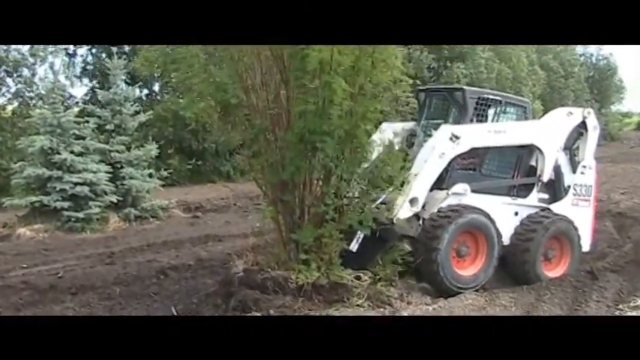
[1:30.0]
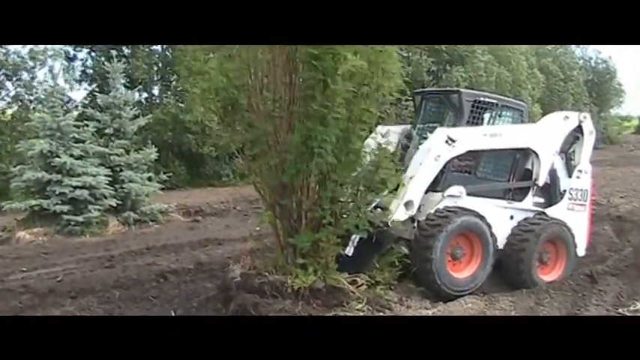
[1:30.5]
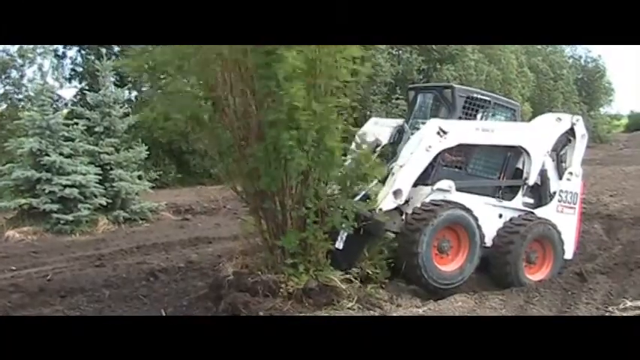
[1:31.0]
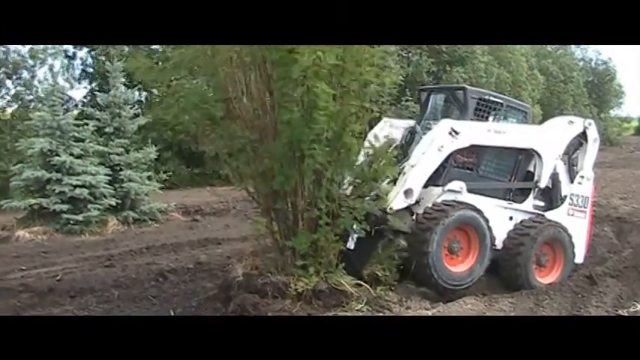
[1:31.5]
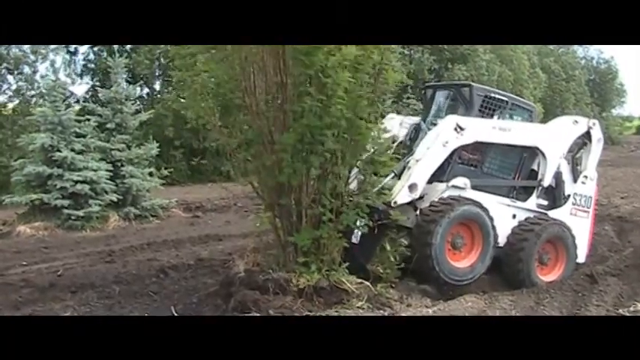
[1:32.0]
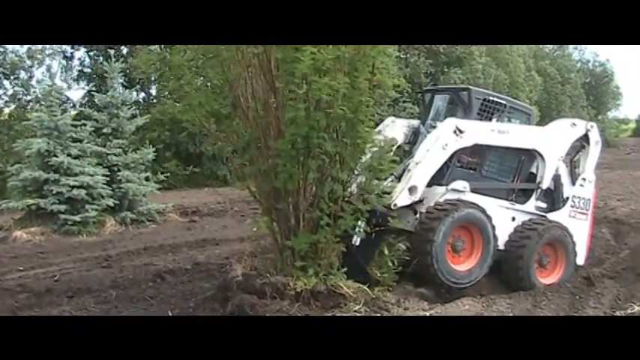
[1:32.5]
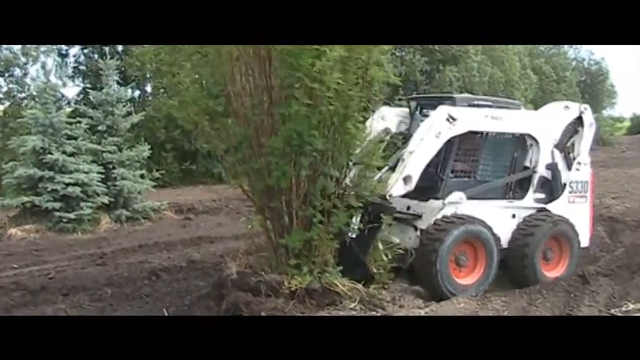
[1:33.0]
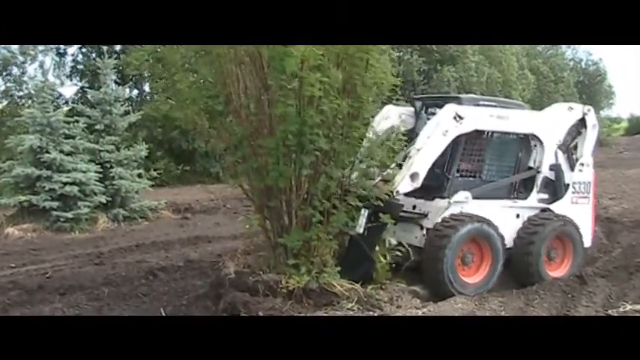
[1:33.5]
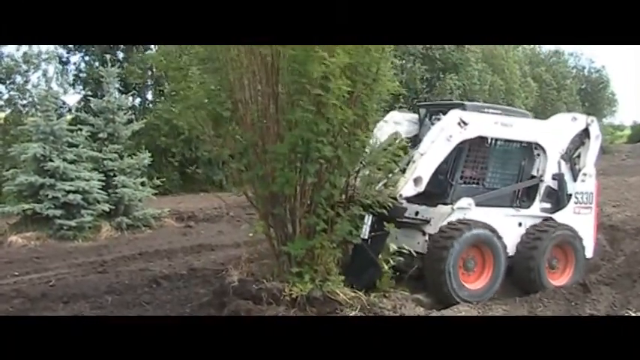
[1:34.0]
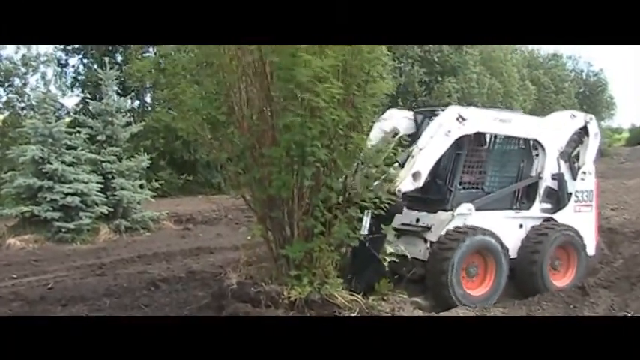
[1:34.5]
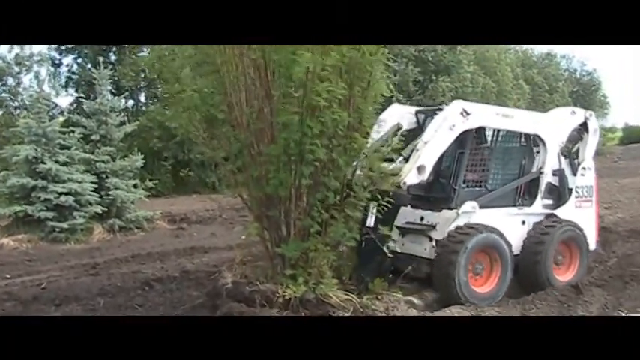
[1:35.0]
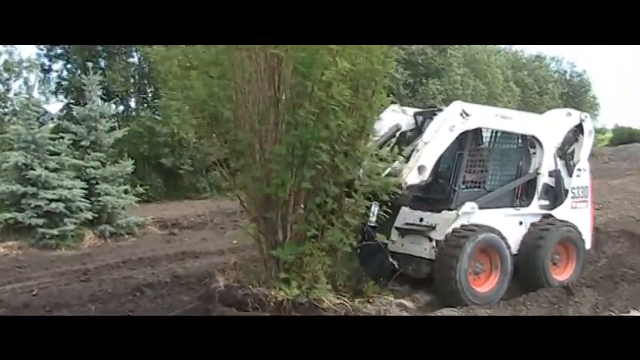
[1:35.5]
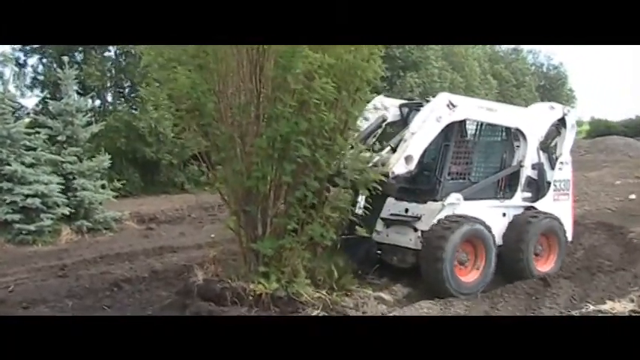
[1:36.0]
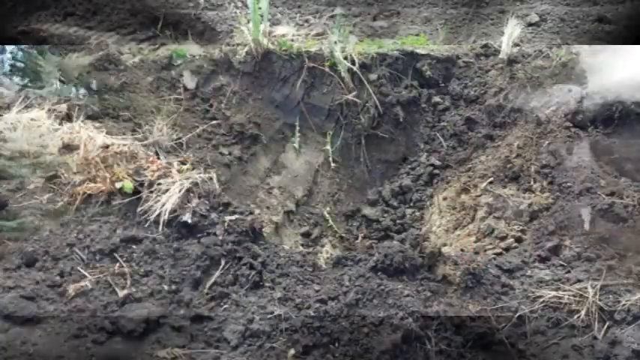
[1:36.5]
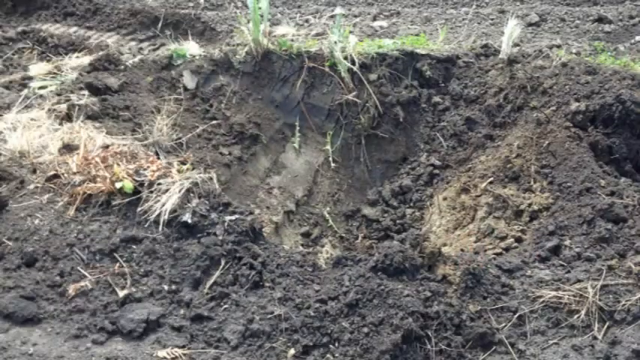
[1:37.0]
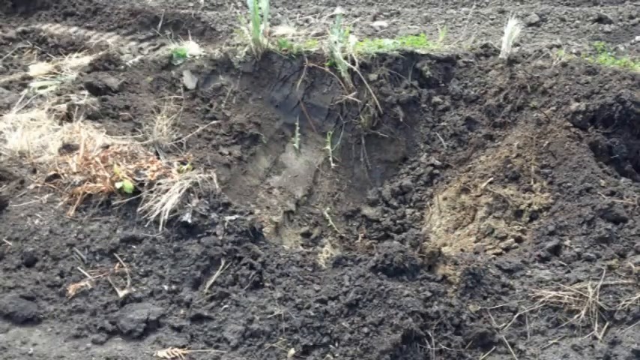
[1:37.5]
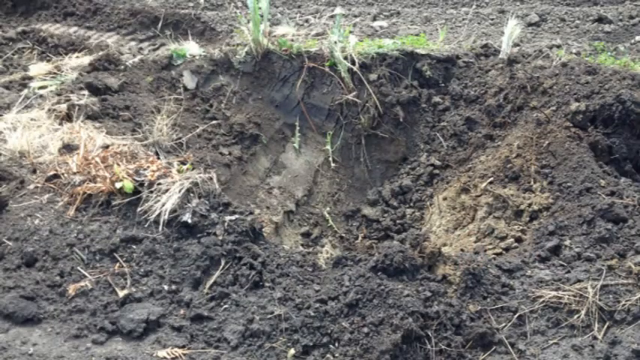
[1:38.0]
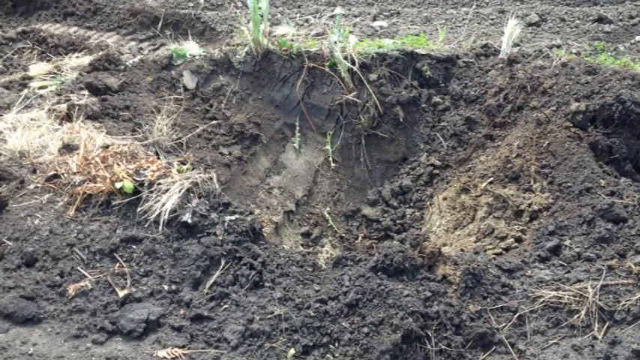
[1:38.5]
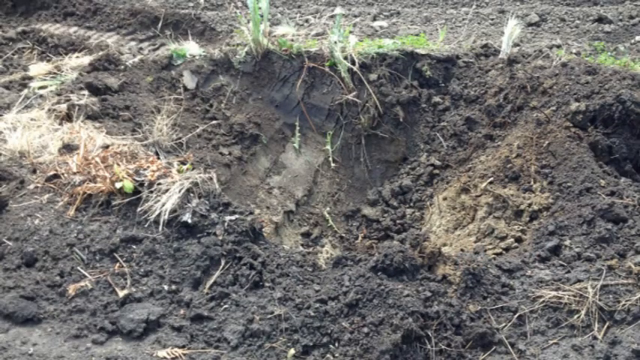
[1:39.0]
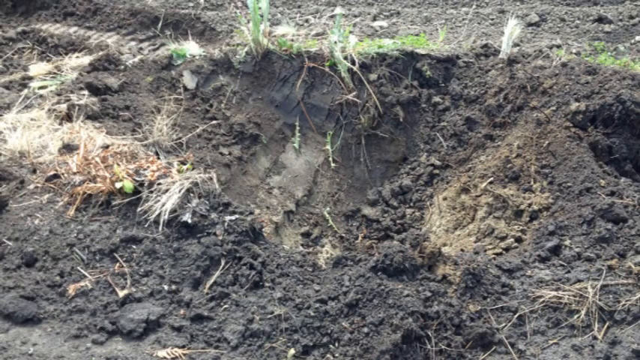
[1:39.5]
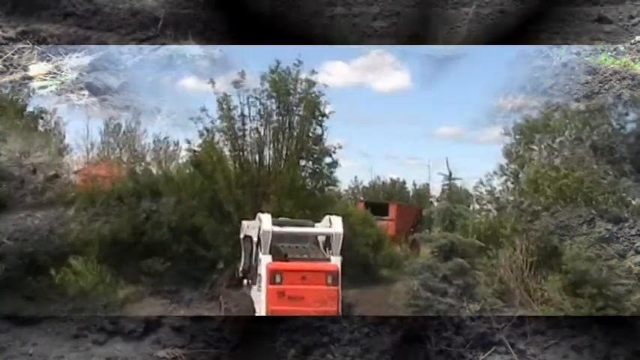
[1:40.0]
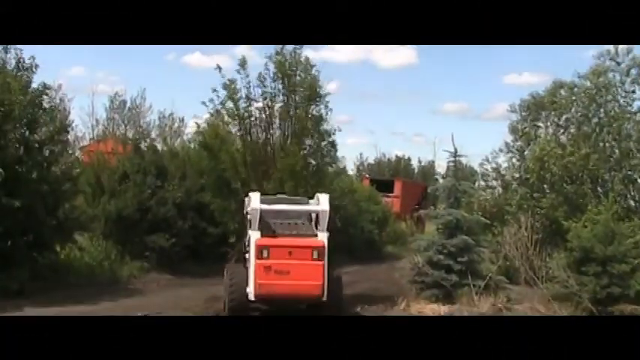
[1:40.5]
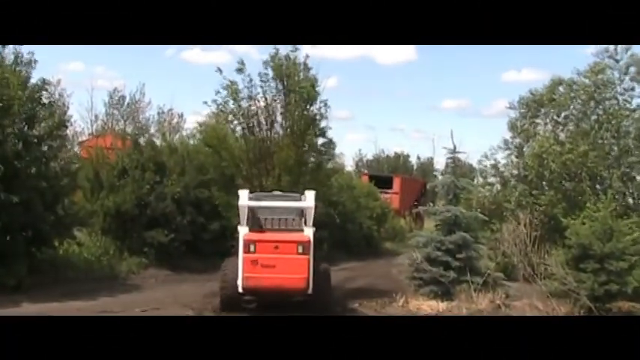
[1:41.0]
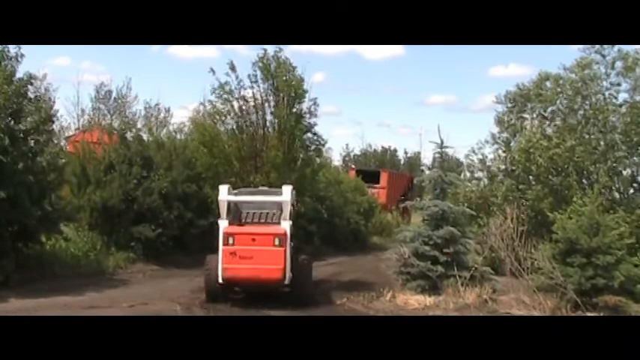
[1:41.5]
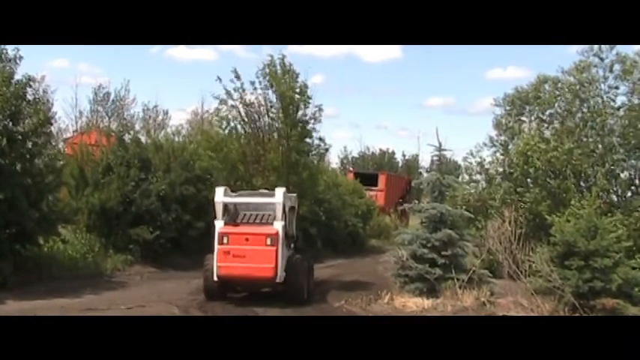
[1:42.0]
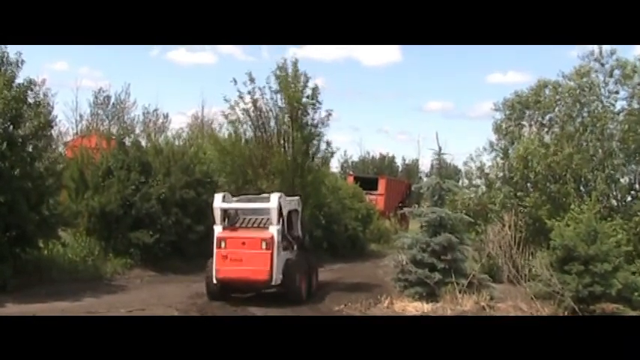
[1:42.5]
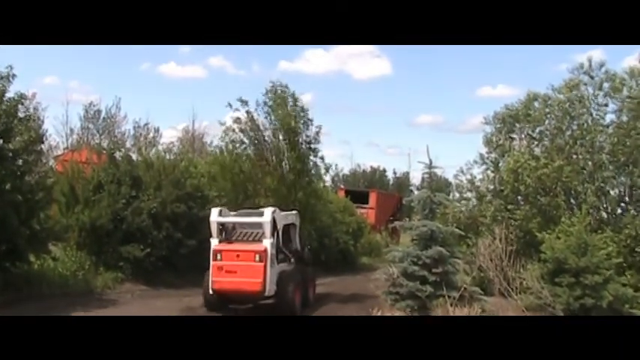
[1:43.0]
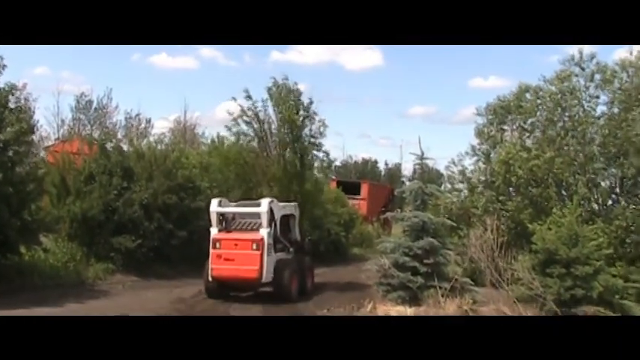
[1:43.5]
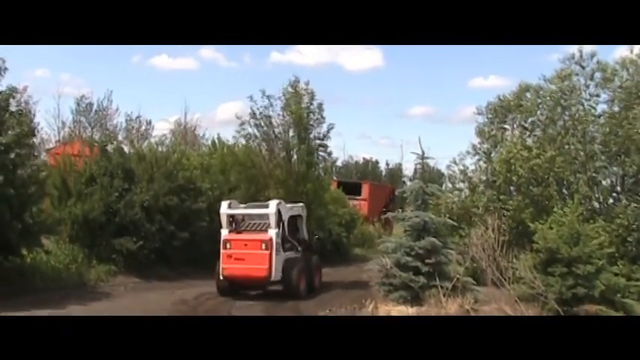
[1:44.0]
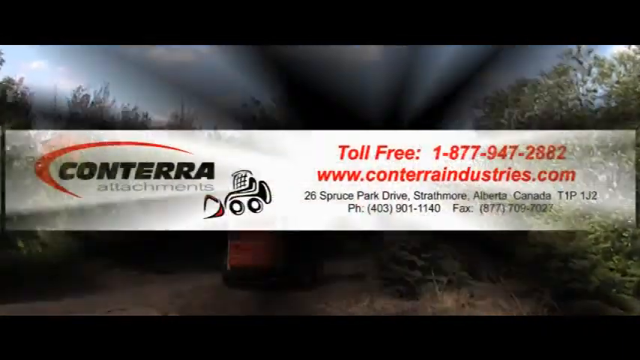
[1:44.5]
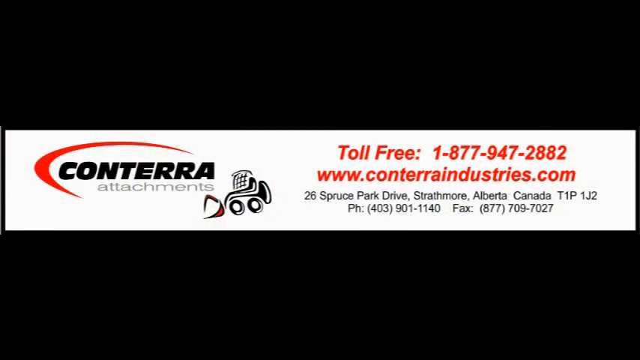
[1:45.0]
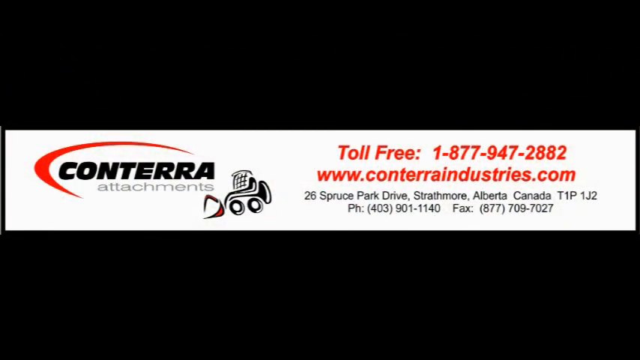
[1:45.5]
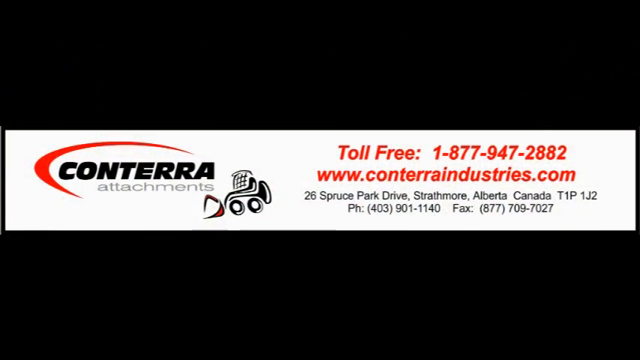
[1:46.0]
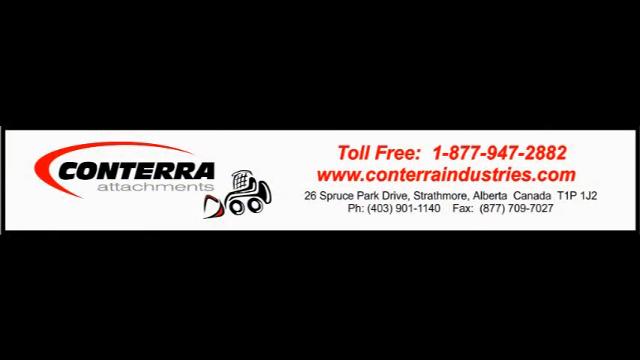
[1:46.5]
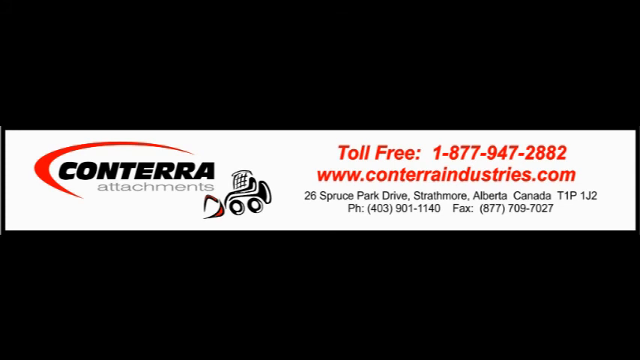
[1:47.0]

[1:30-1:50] The piece of white heavy machinery has big wheels with orange circles in the tires and a cage like a cockpit. It puts down a tree with the tree shovel, and looks like it might be planting it. In another scene it goes to plain dirt, where the tree roots are visible after it cleanly moved the tree. It moves another, pretty big tree and drives off into the distance. At the end the ad comes up, reading "Kintera Attachments" with a little backhoe, and "toll free 1-877-947-2882, www.kinteraindustries.com, 26 Bruce Park Drive, Strathmore, Alberta, Canada, T1P1J2, phone number 403-901-1140, fax 877-709-7027".